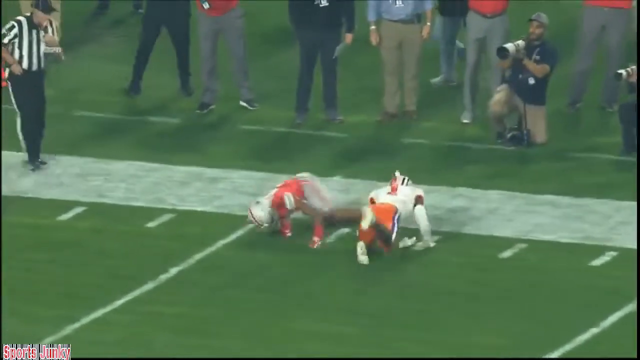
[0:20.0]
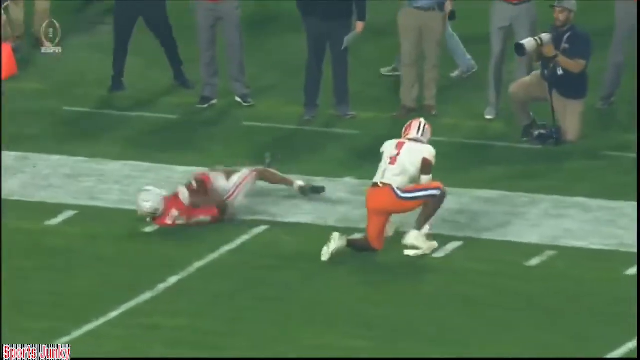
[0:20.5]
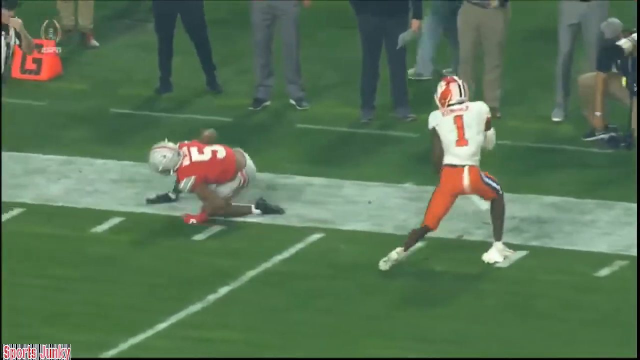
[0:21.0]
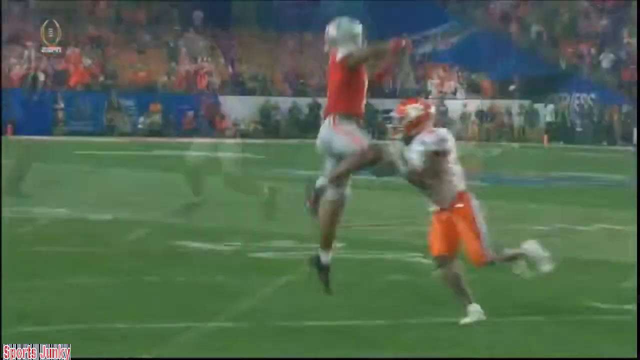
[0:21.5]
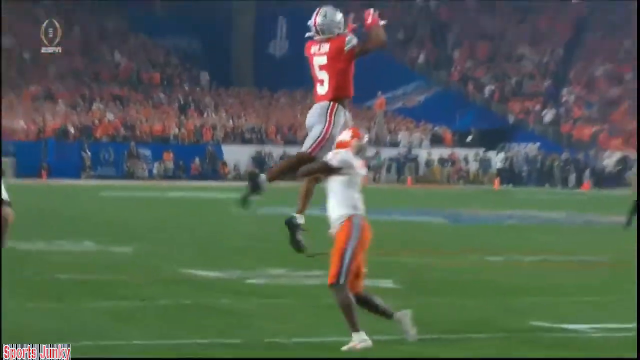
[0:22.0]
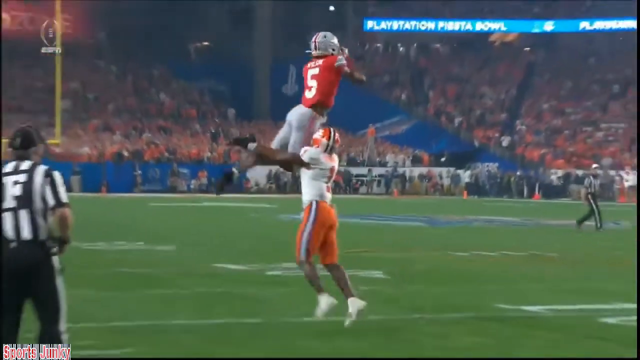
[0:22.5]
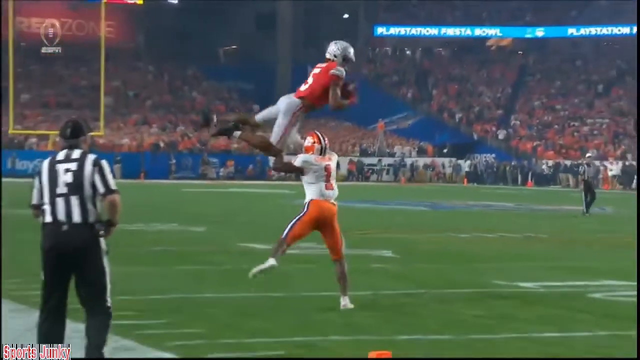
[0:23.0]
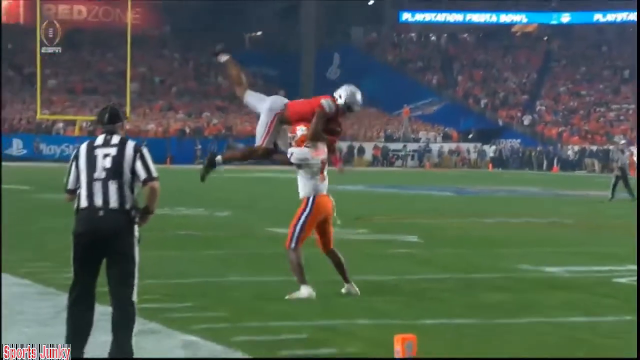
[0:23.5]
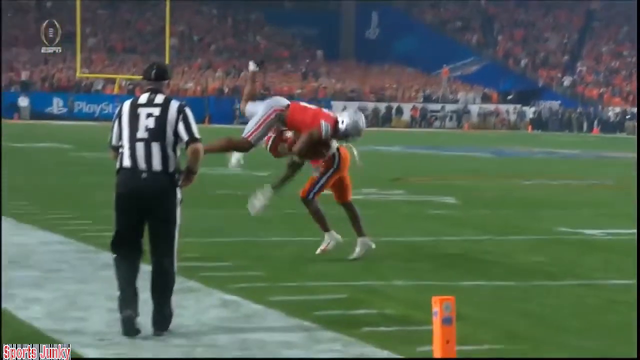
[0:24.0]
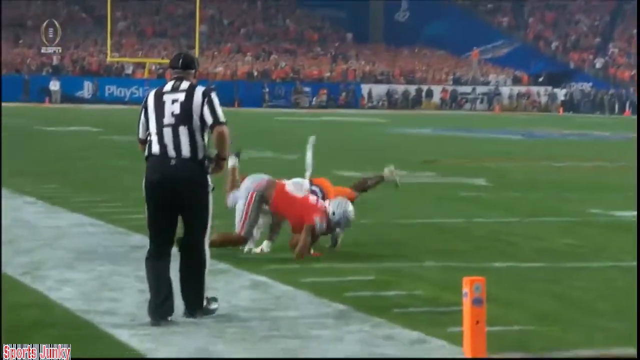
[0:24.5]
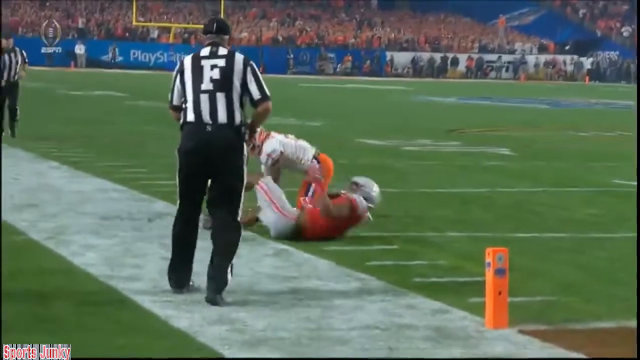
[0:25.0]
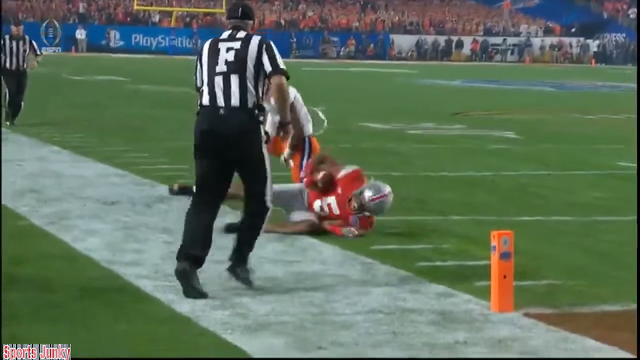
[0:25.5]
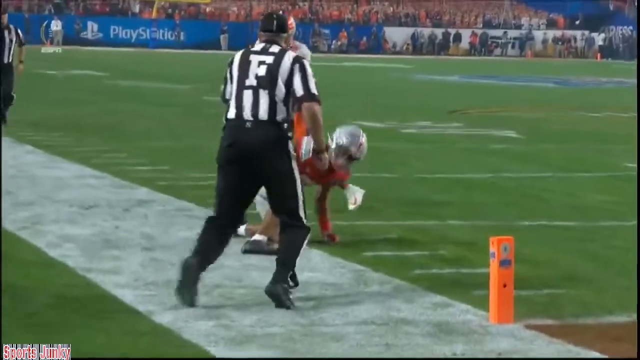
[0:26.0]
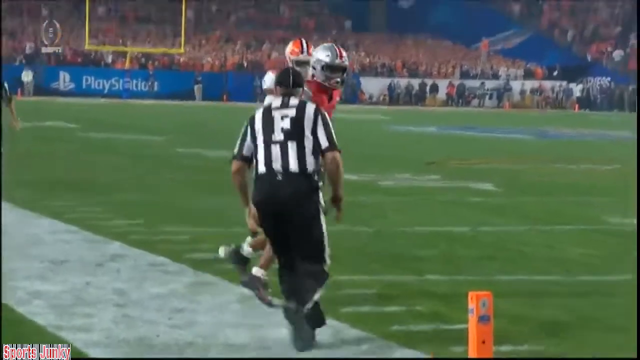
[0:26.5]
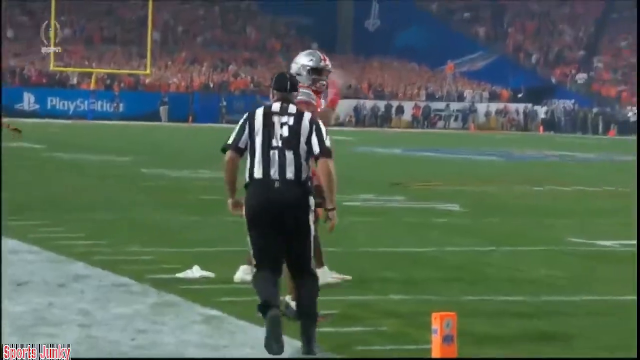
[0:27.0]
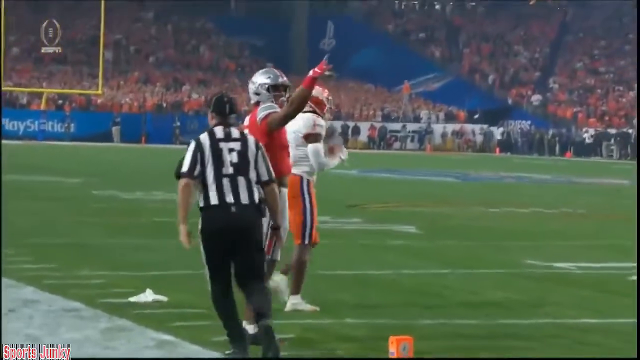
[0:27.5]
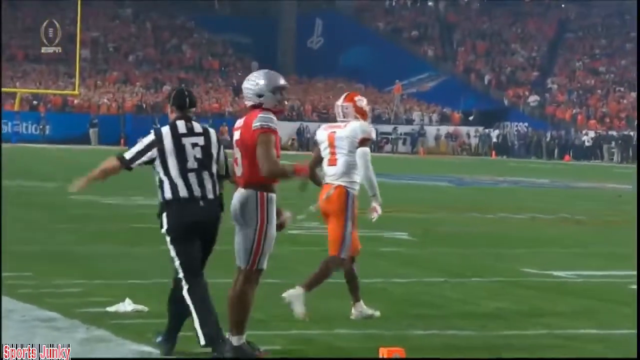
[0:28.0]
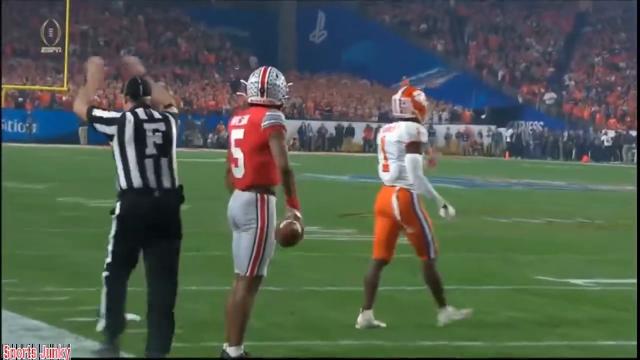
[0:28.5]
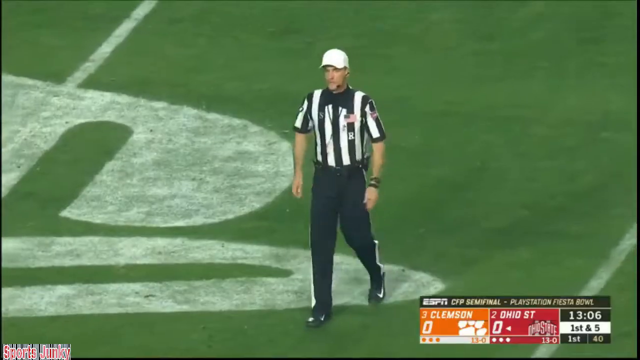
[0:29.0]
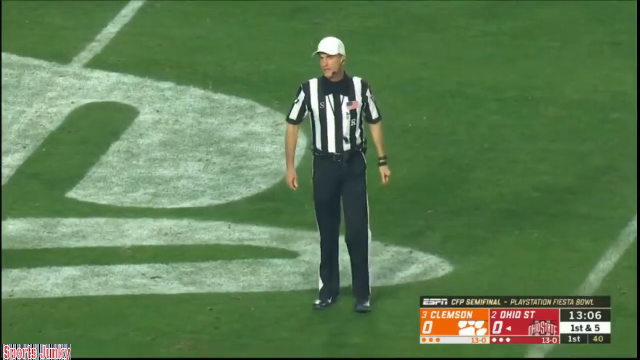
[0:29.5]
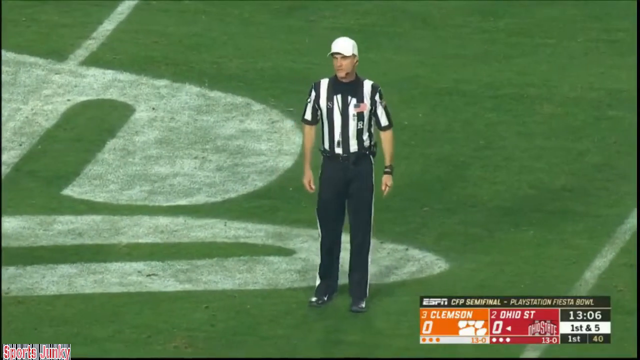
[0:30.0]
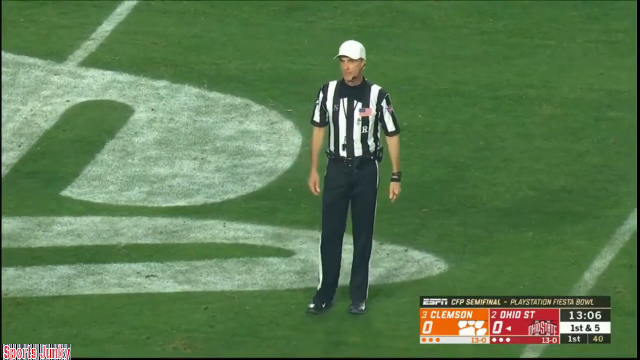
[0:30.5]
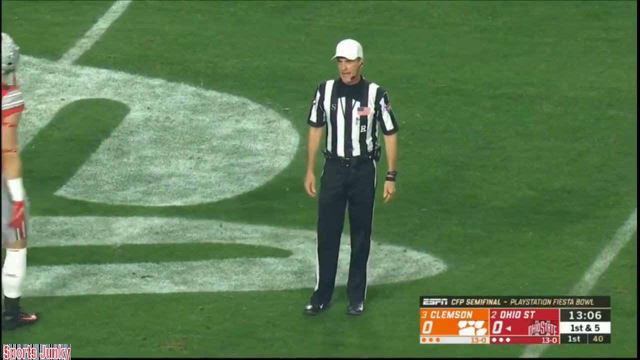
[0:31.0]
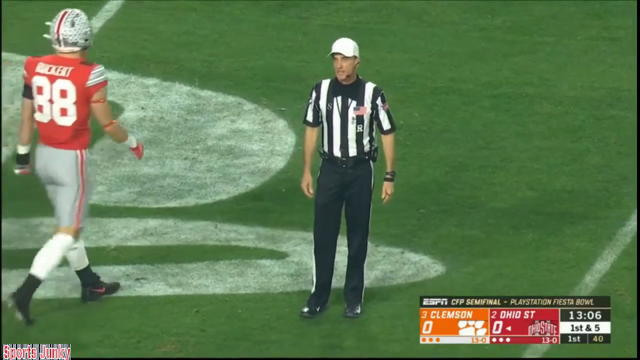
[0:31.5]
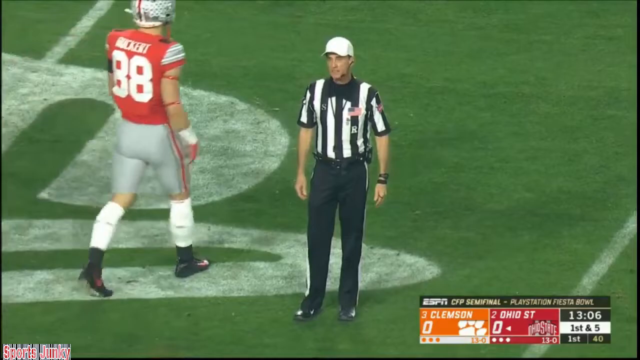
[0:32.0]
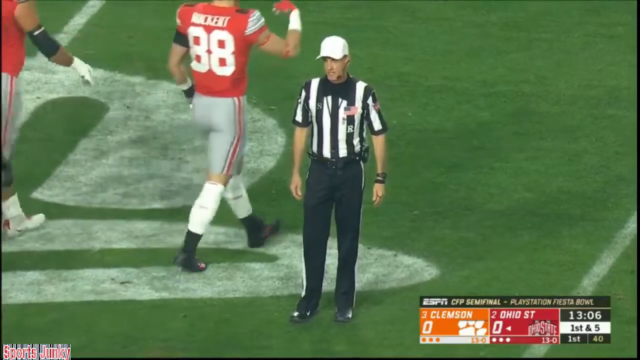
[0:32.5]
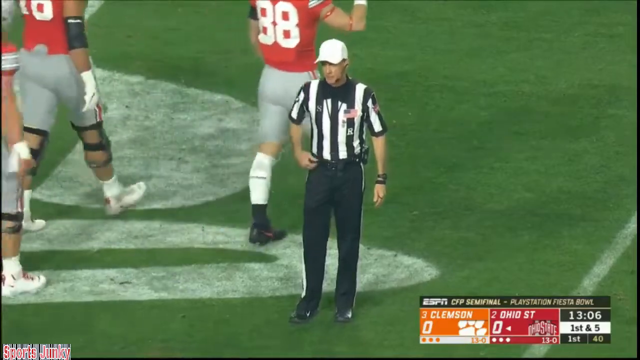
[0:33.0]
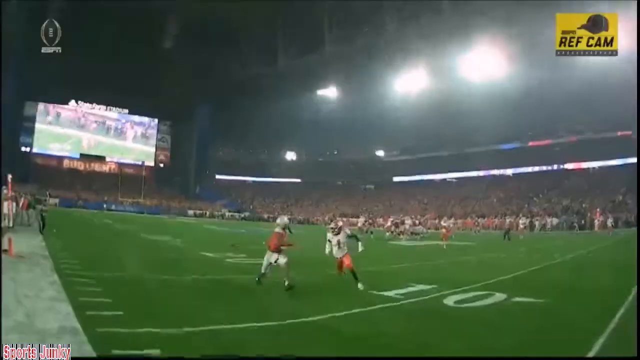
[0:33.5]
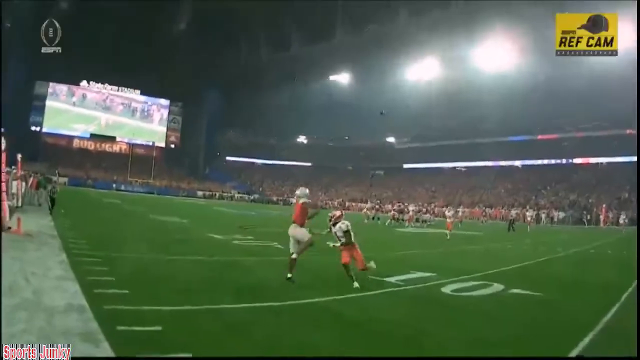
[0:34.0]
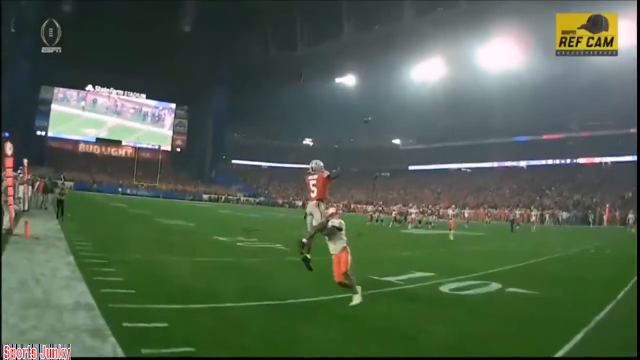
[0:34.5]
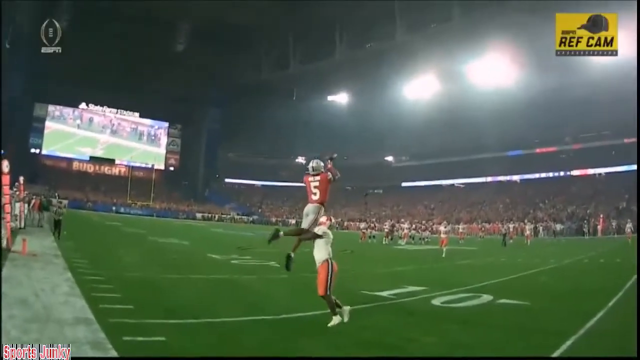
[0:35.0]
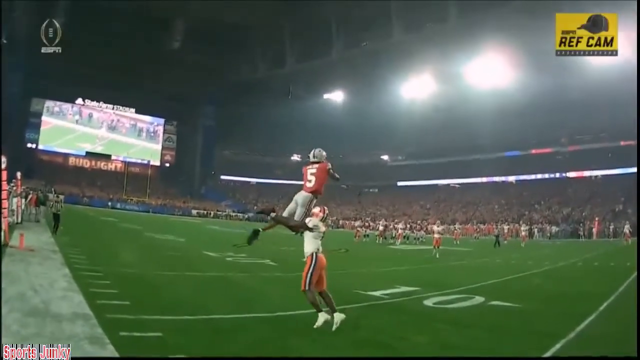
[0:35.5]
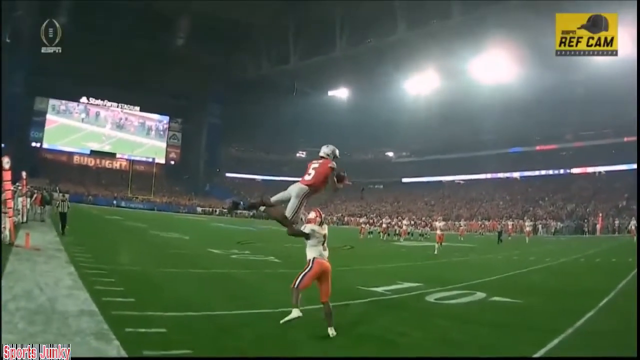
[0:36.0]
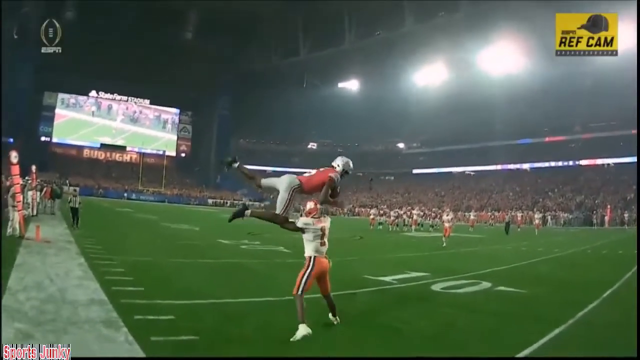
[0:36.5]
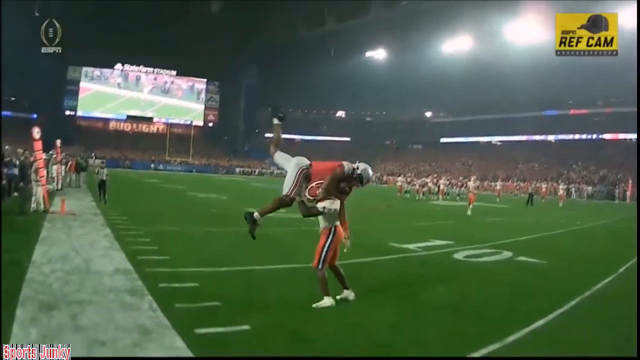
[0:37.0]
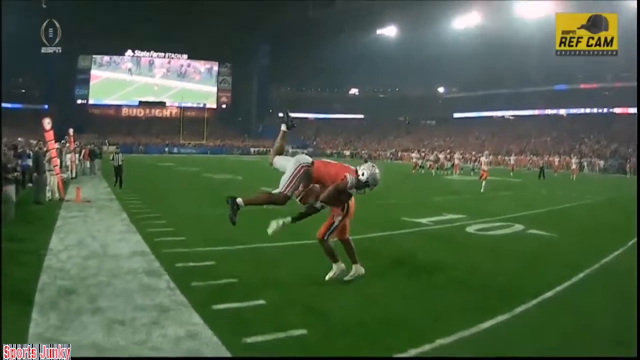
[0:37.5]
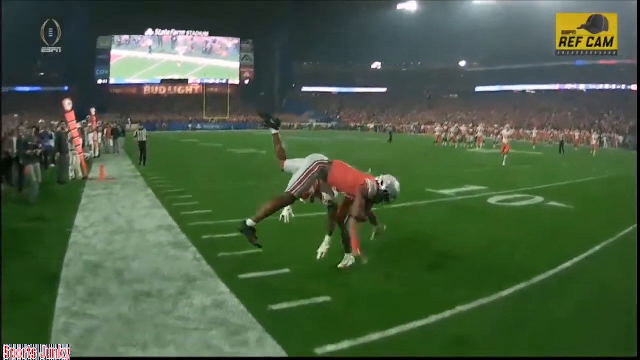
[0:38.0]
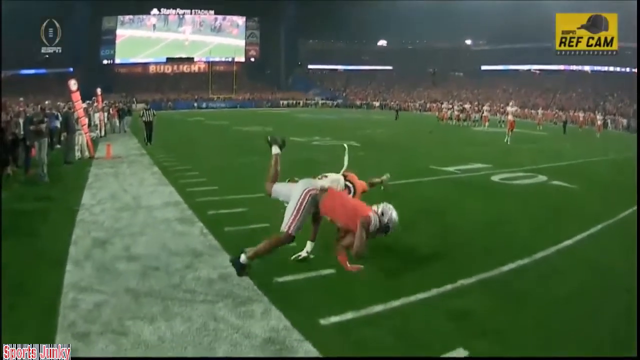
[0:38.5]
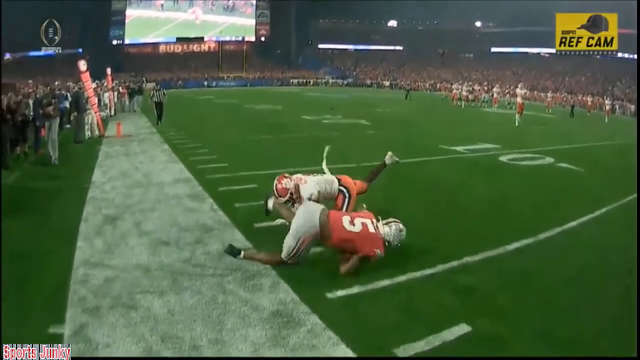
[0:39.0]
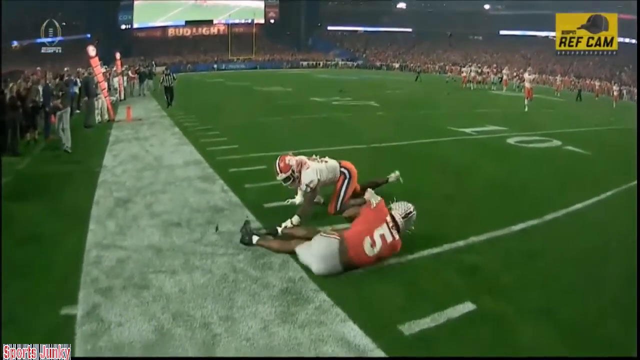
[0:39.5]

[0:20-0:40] The PlayStation Fiesta Bowl on ESPN between Clemson and Ohio State continues, with Ohio State having just gotten a first down deep in Clemson territory. Number five jumped way up in the air and was hit in the air, and the officials are looking to make sure one of his feet was inbounds. A timeout has been called to review the play. It looks as if he is out of bounds, but he was pushed out of bounds. The same play is then shown from ESPN's REF cam, indicated by a yellow watermark in the top right-hand corner.